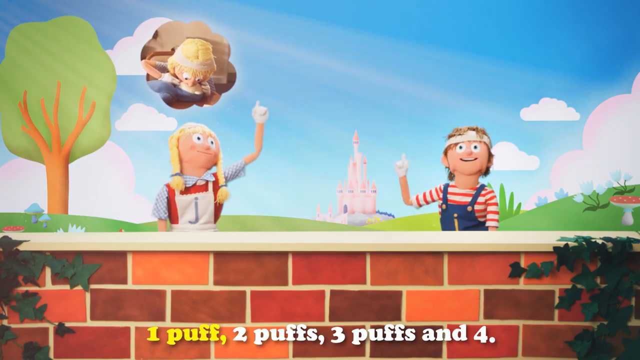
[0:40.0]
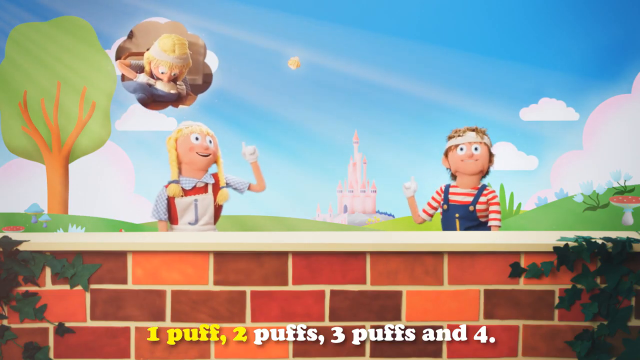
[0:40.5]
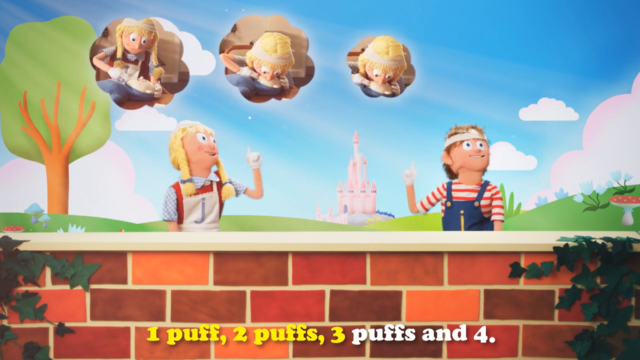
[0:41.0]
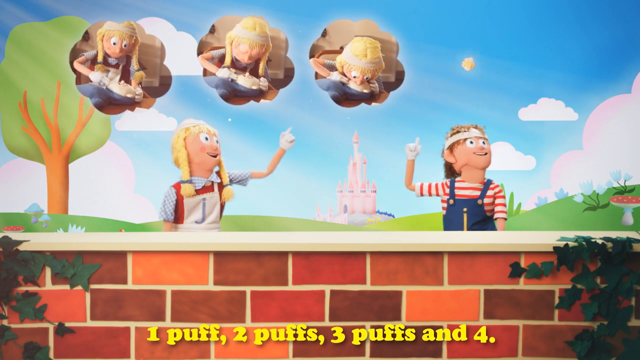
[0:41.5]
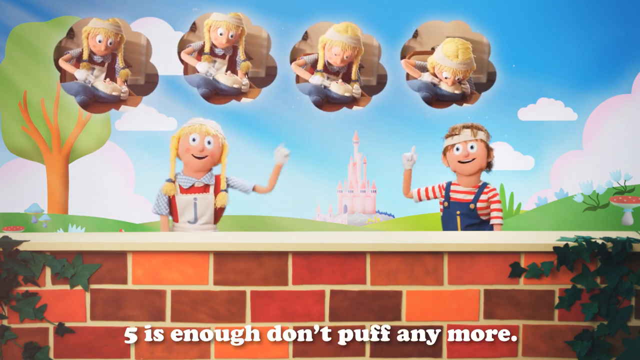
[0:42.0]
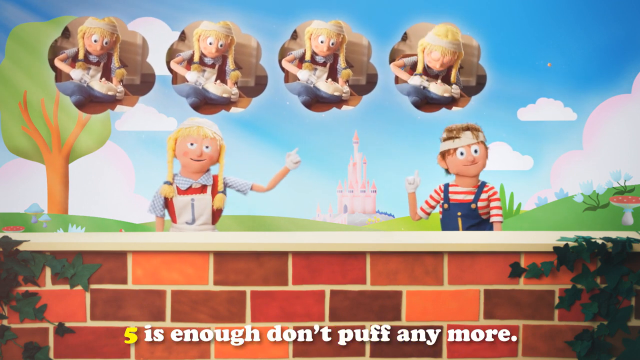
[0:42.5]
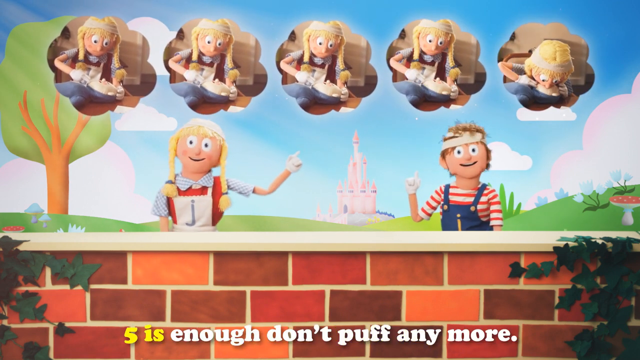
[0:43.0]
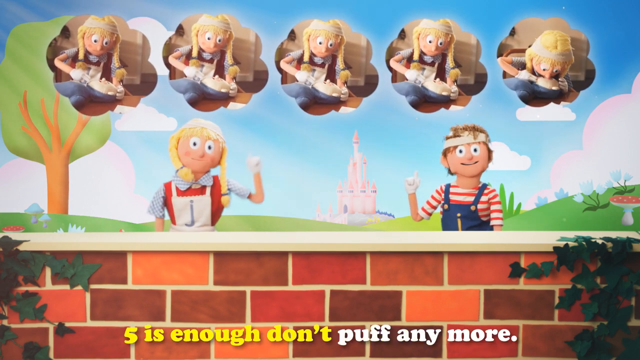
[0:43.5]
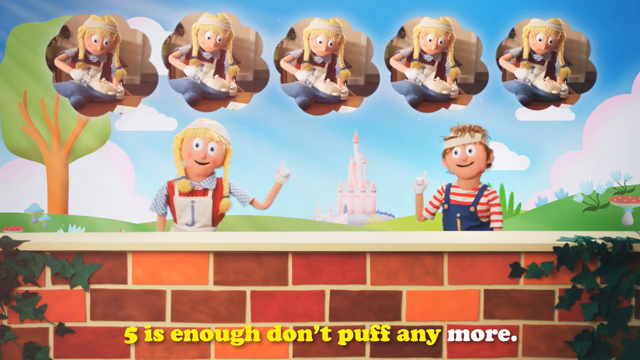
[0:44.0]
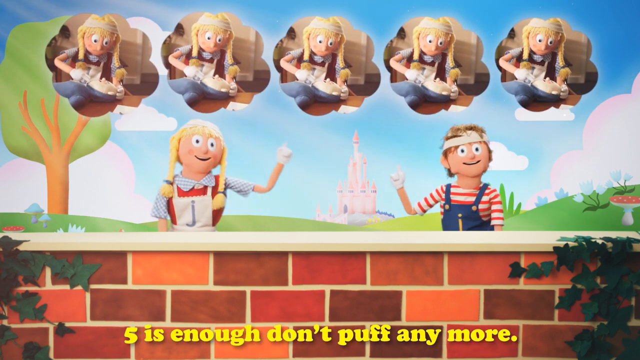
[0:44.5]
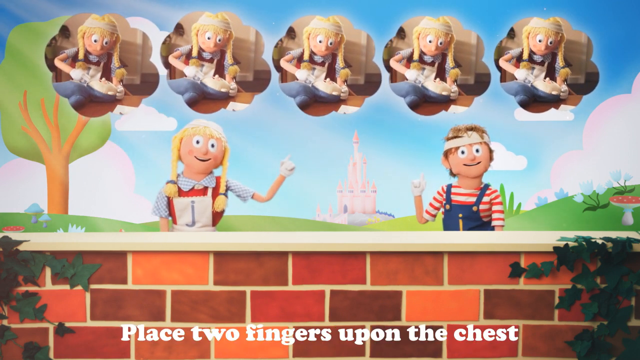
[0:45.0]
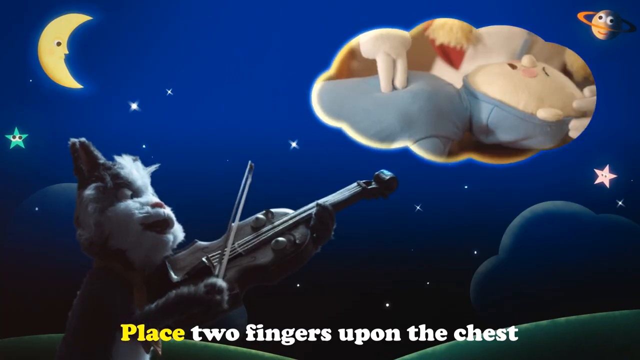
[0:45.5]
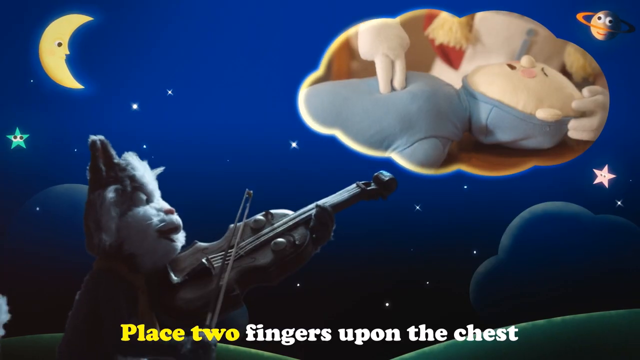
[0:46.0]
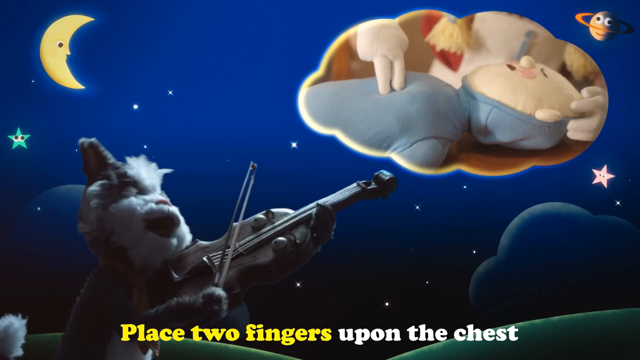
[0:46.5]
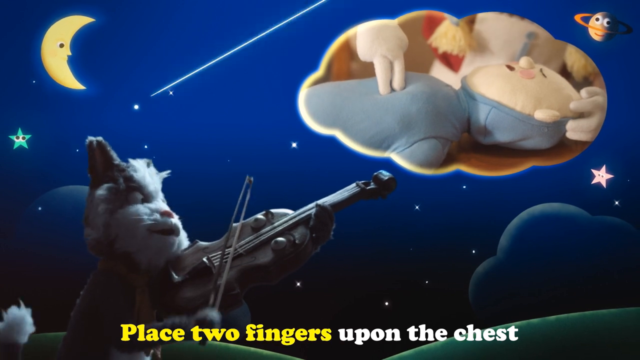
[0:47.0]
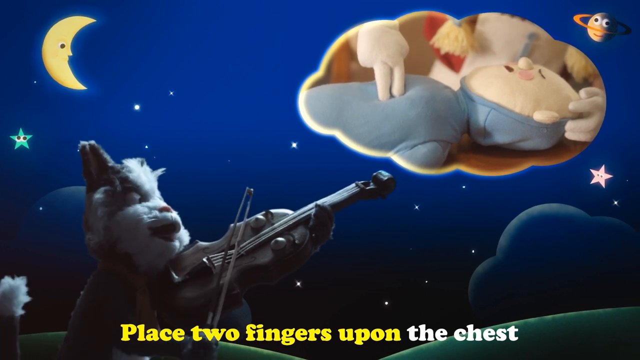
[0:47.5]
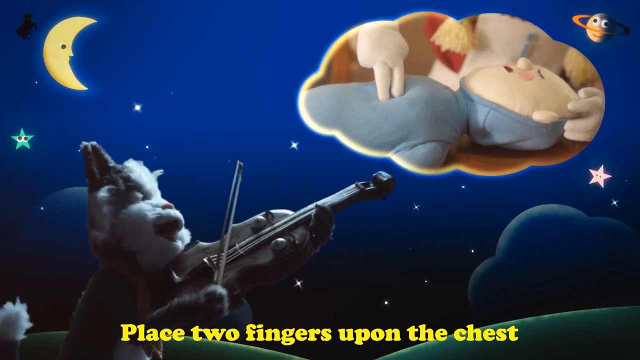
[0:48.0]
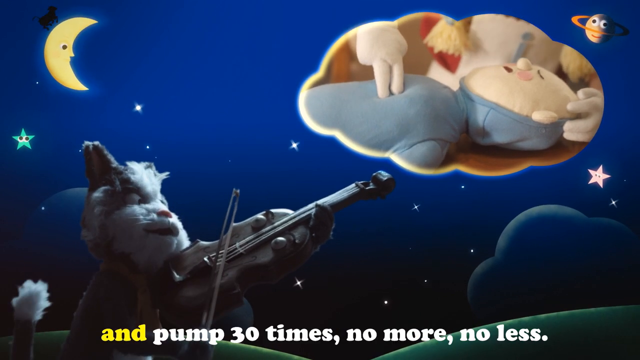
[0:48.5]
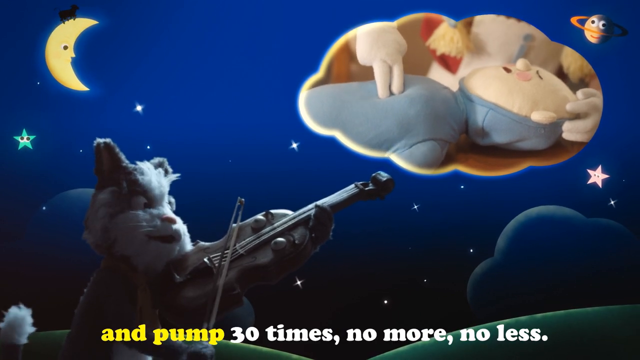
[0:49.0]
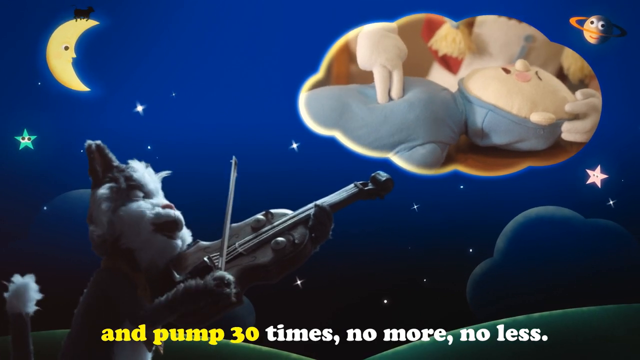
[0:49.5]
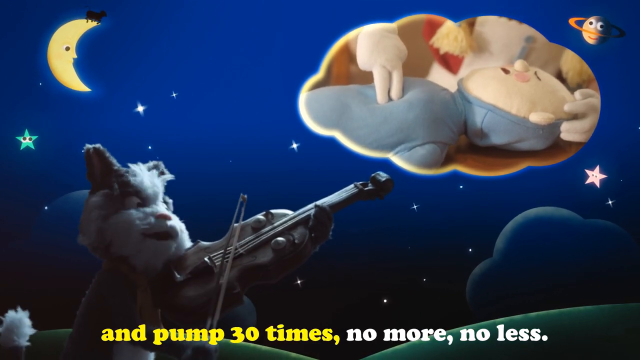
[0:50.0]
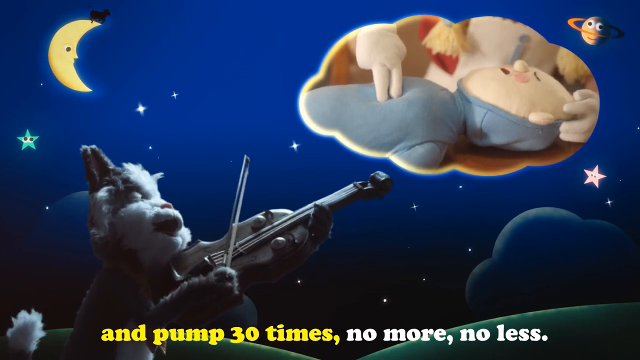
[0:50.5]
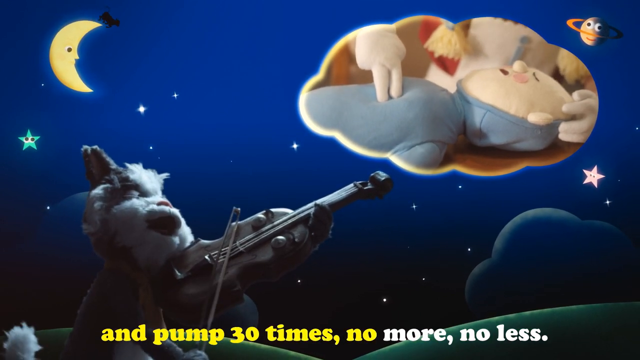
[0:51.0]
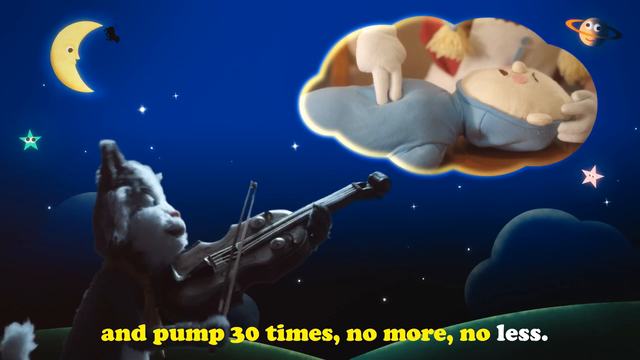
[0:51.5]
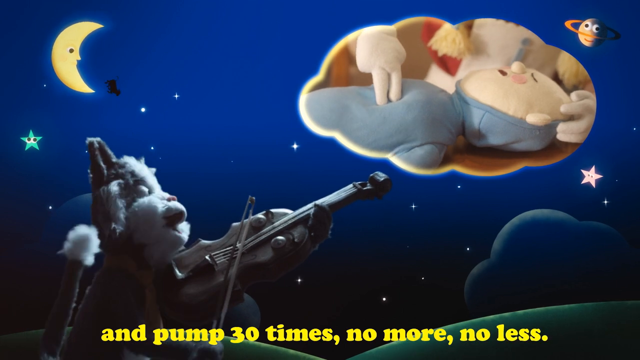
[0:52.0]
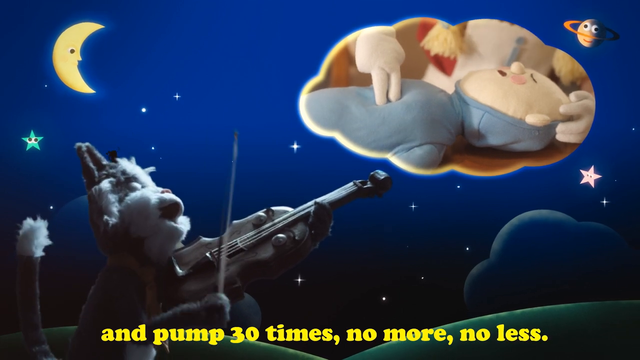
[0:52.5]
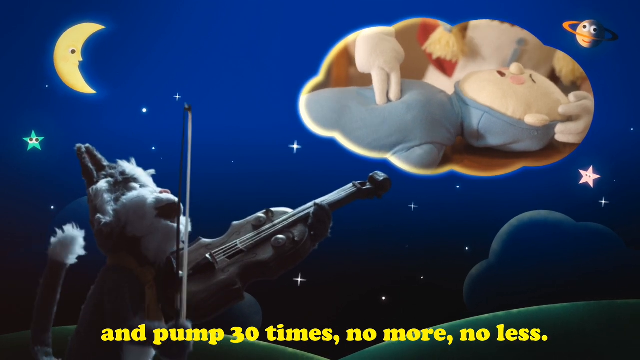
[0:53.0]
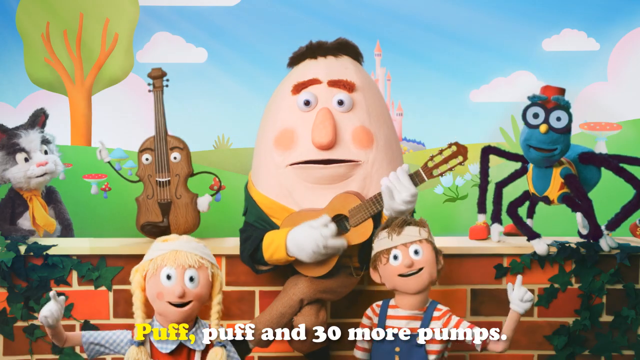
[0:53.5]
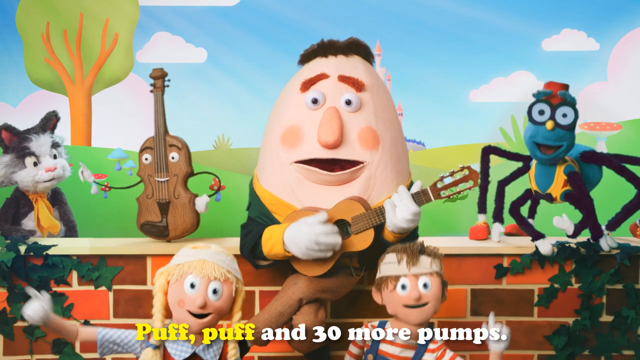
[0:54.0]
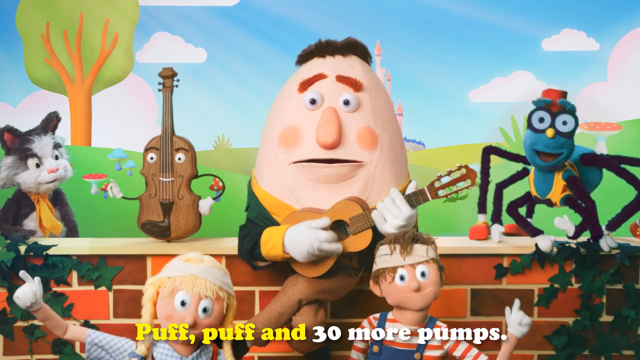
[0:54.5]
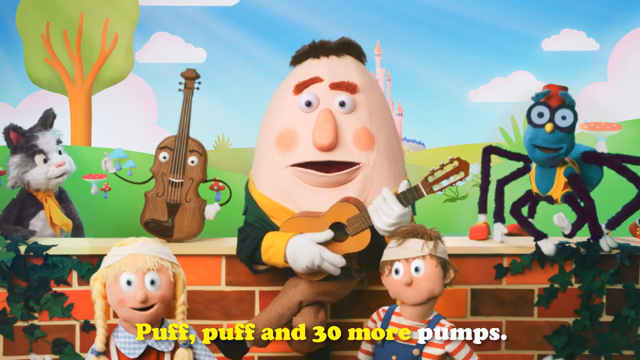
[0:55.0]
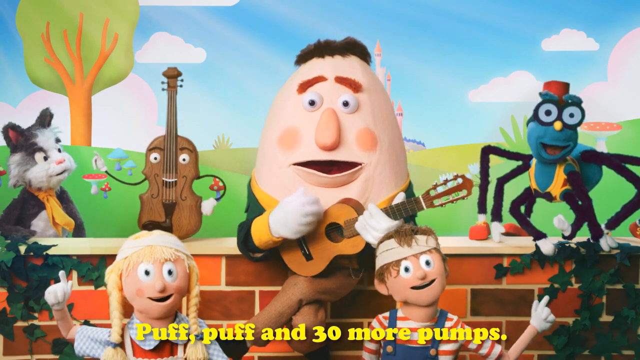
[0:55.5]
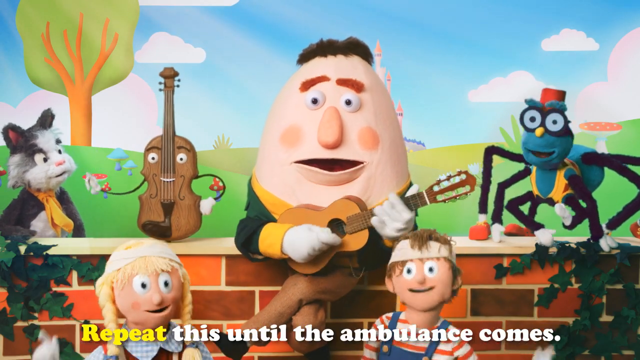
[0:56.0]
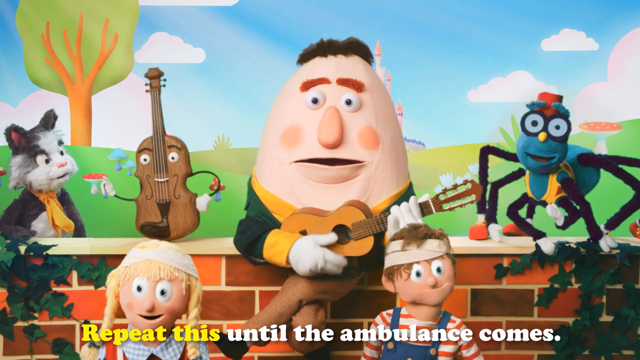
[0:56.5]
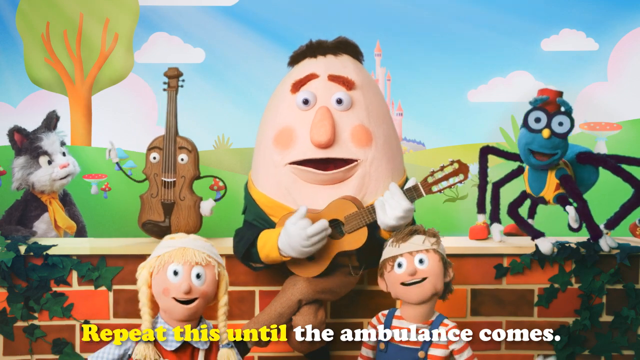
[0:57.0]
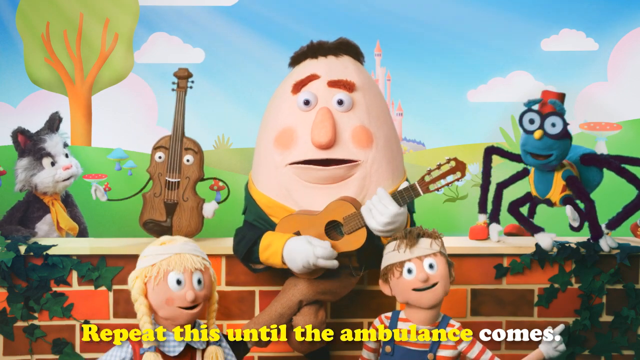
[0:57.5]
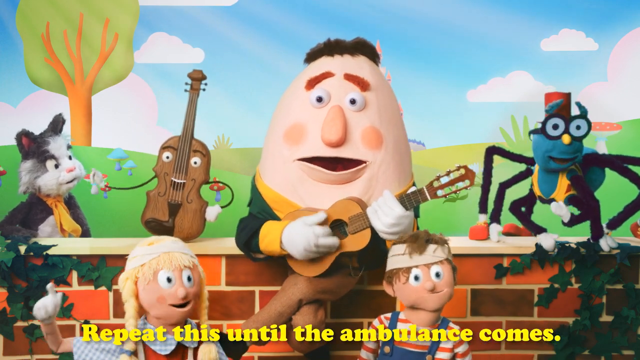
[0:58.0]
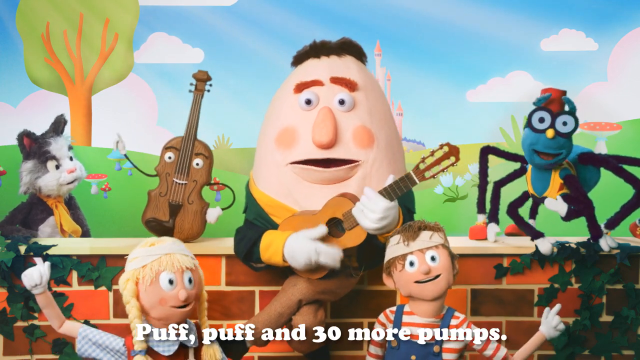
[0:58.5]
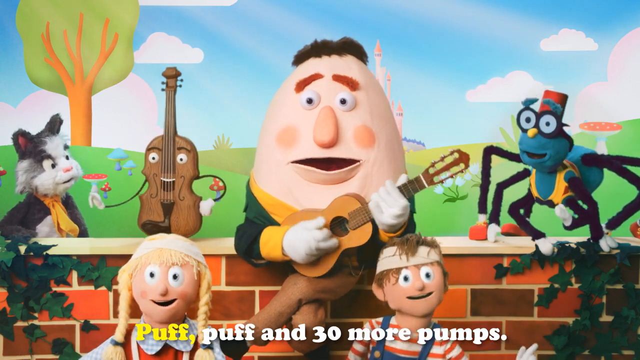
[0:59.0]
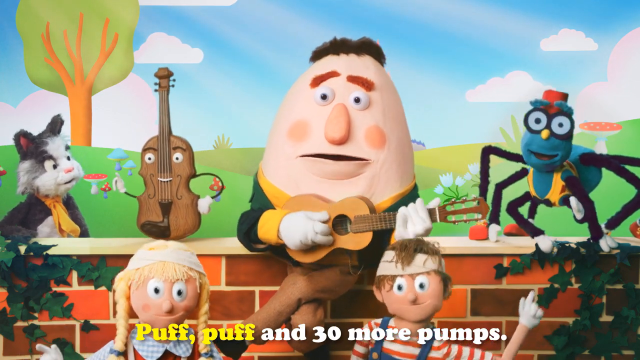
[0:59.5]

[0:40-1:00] There are pop-ups and little clouds, and then it is nighttime. Two fingers give compressions on one of the cloud-shaped pictures, and the steps are shown in cloud shapes above the girl's head, along with the words "puff puff and 30 more puffs". An animal that looks like a gray, black and white cat plays a violin, and a violin is still in the picture. A person in blue overalls and a red and white striped shirt, possibly another girl, is present. Text says "a pump 30 times puff puff repeat this until the ambulance comes". A half moon is in the sky, and something that looks like a cow falls off the moon.